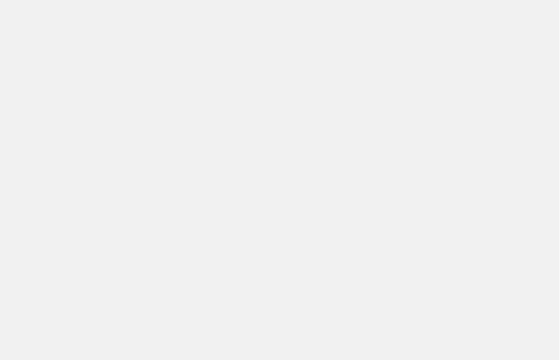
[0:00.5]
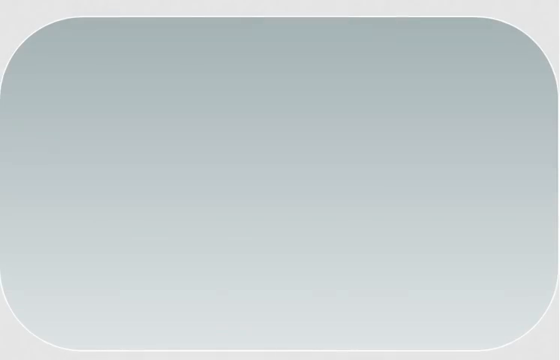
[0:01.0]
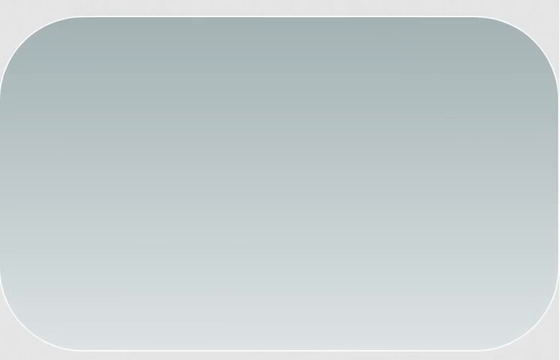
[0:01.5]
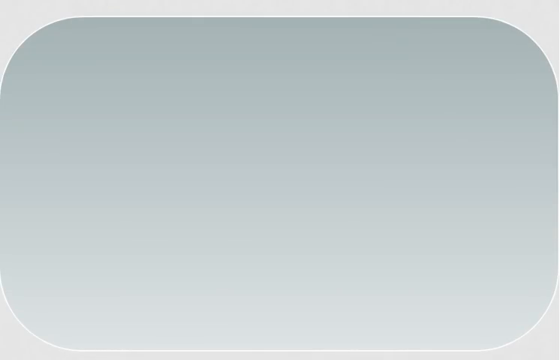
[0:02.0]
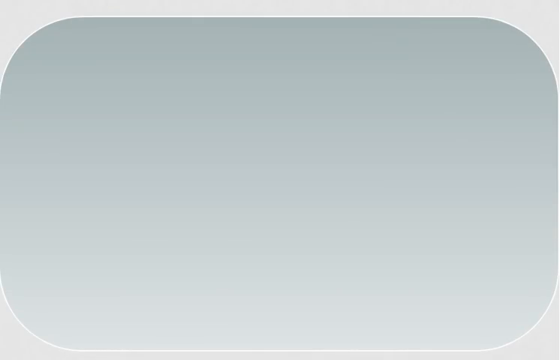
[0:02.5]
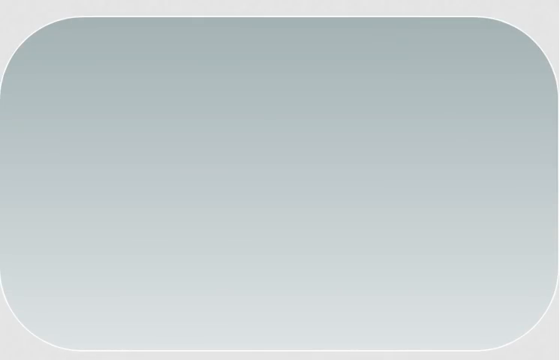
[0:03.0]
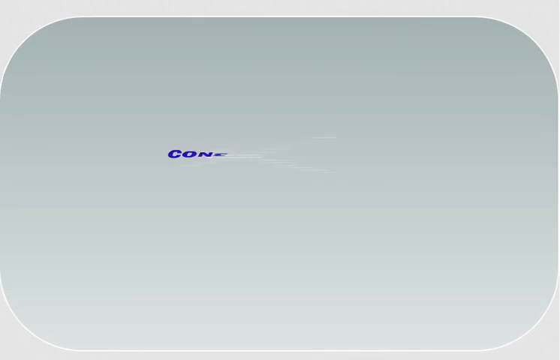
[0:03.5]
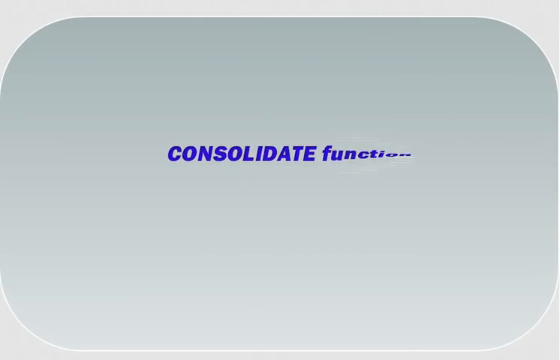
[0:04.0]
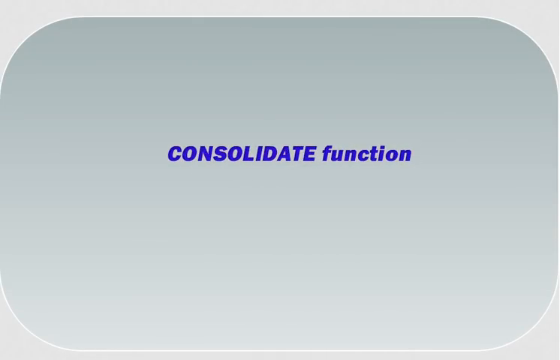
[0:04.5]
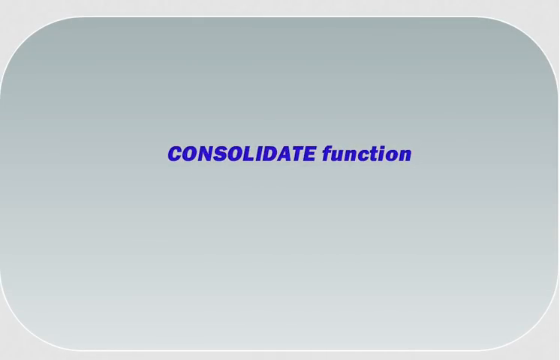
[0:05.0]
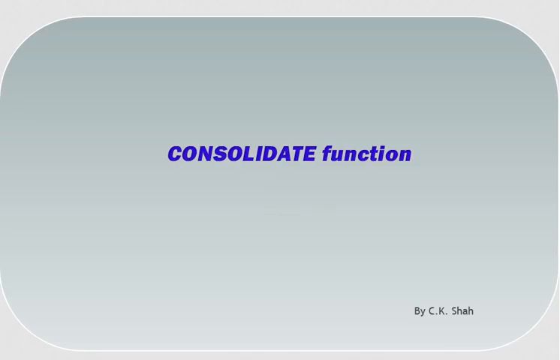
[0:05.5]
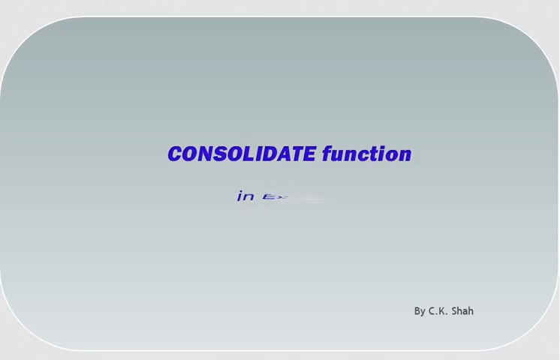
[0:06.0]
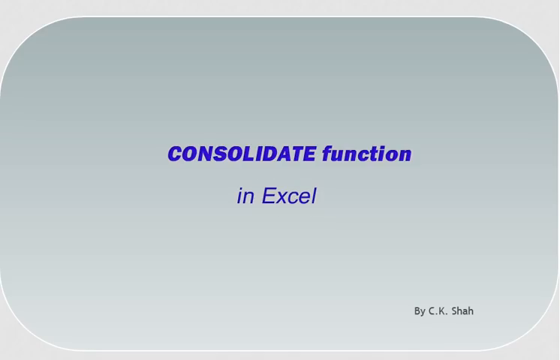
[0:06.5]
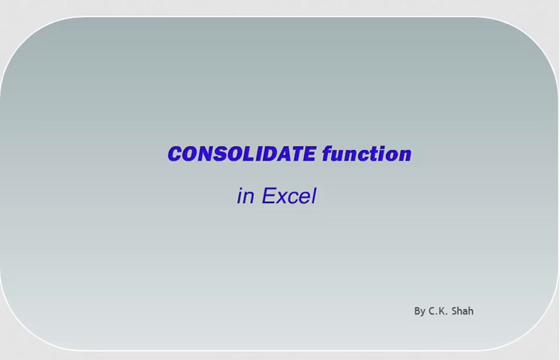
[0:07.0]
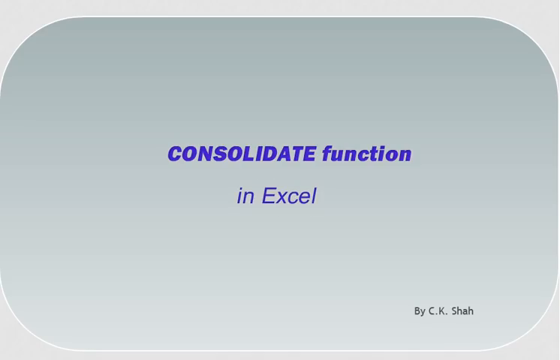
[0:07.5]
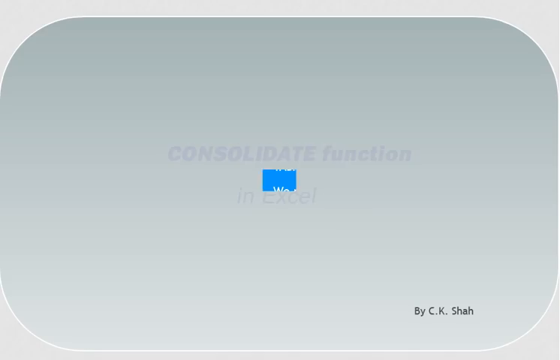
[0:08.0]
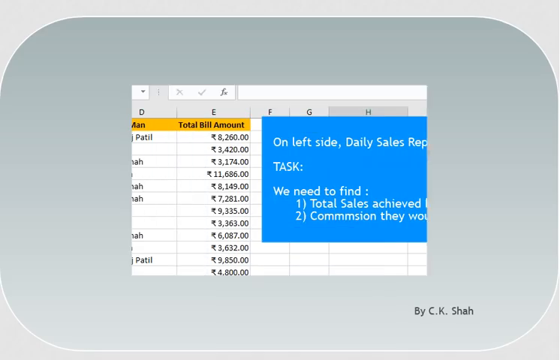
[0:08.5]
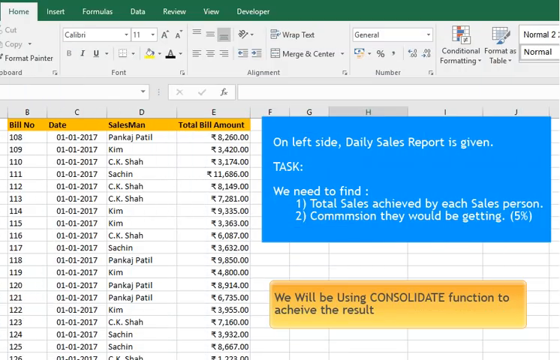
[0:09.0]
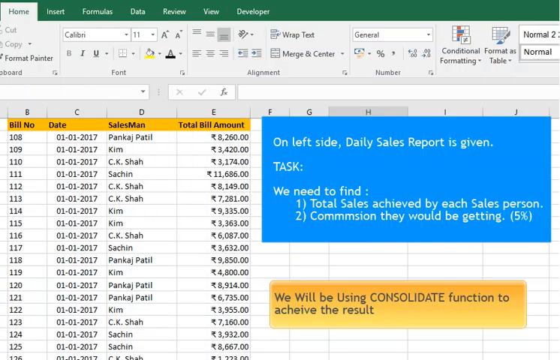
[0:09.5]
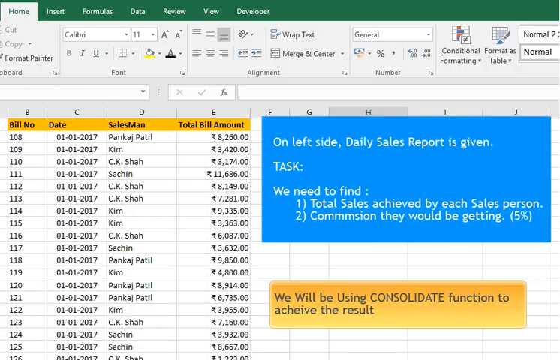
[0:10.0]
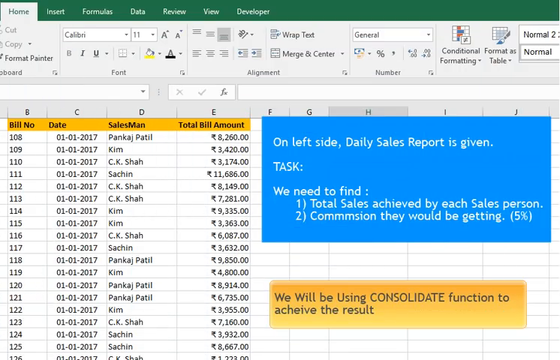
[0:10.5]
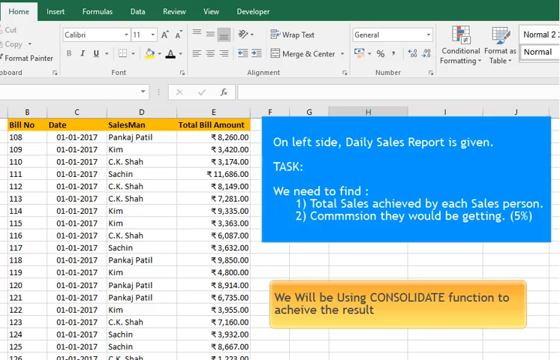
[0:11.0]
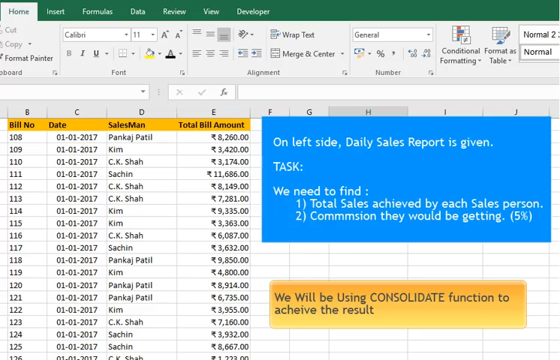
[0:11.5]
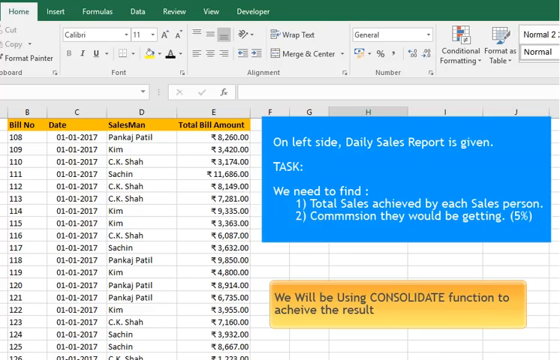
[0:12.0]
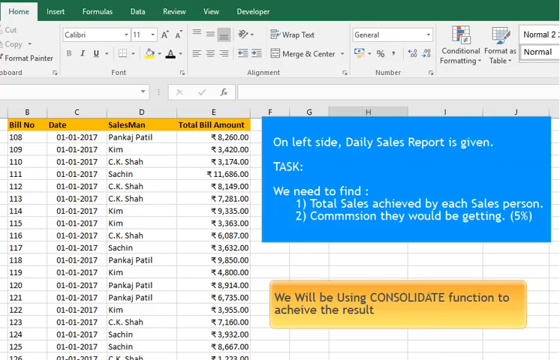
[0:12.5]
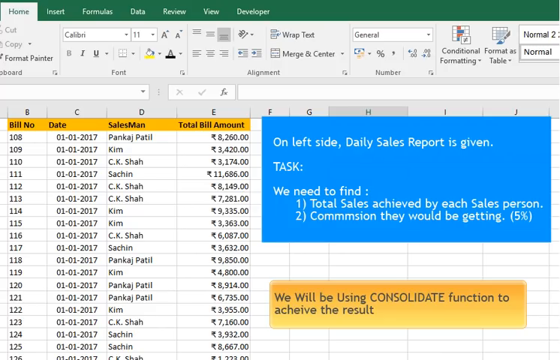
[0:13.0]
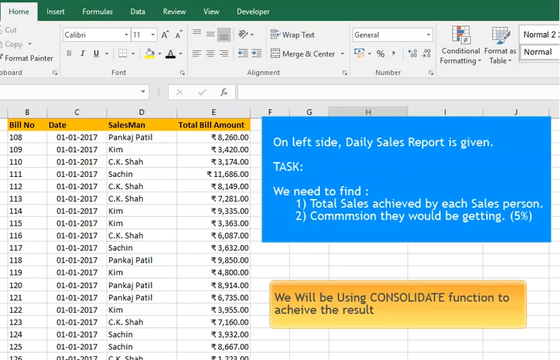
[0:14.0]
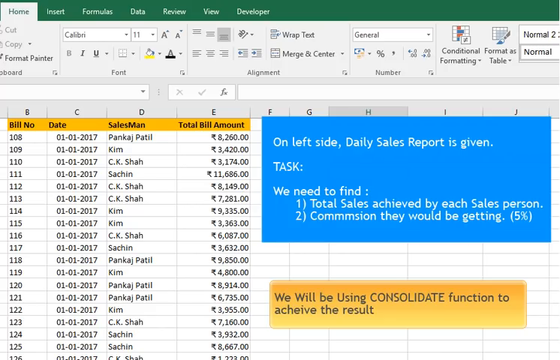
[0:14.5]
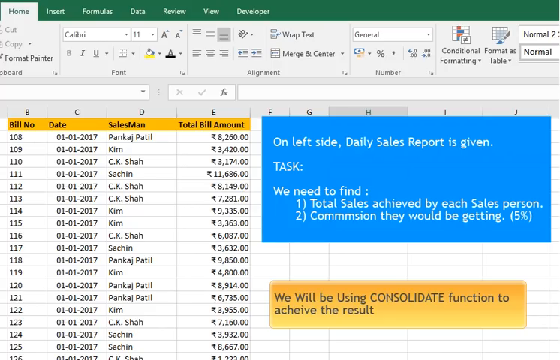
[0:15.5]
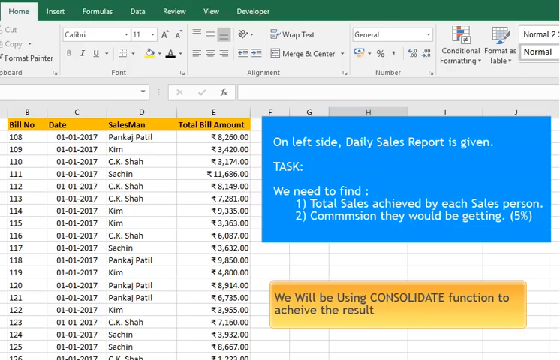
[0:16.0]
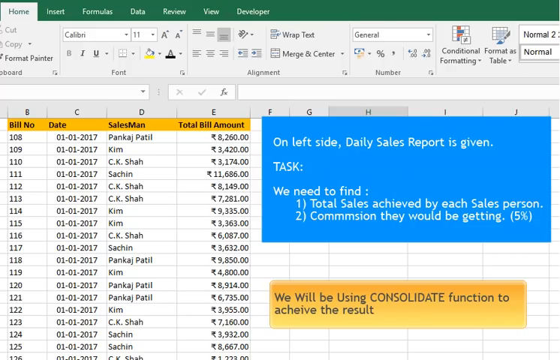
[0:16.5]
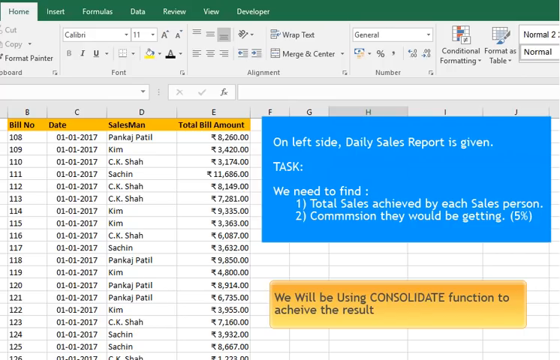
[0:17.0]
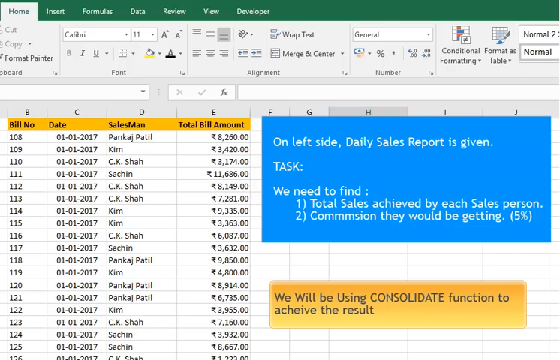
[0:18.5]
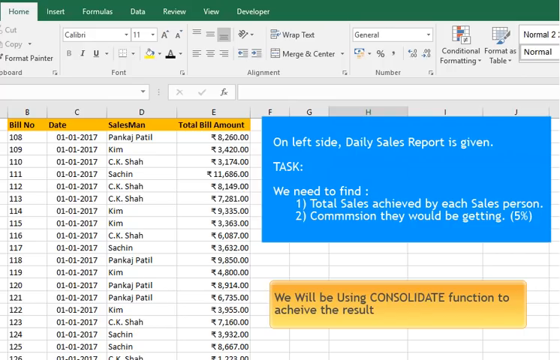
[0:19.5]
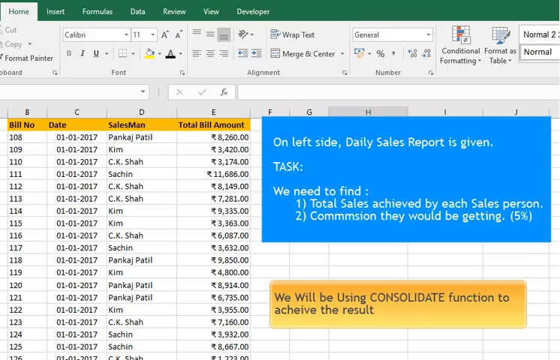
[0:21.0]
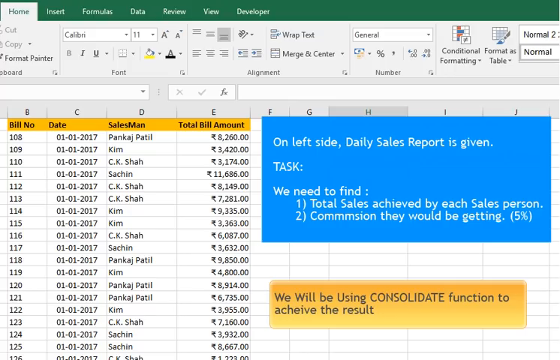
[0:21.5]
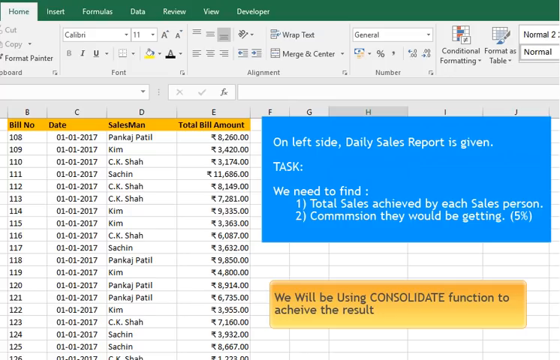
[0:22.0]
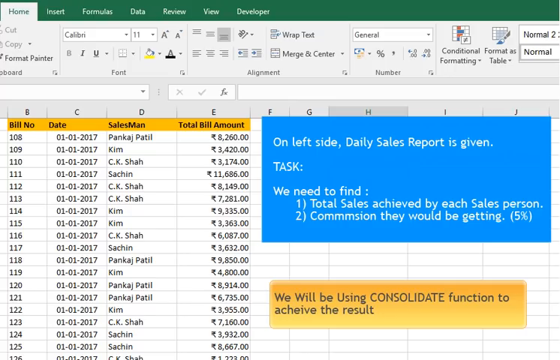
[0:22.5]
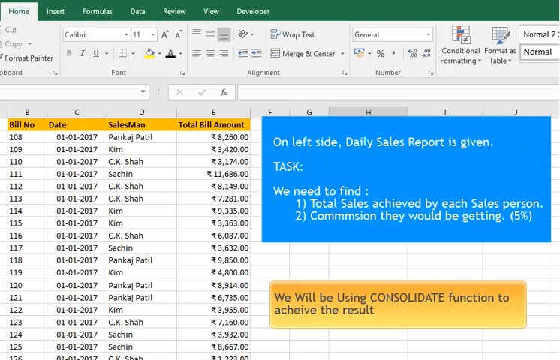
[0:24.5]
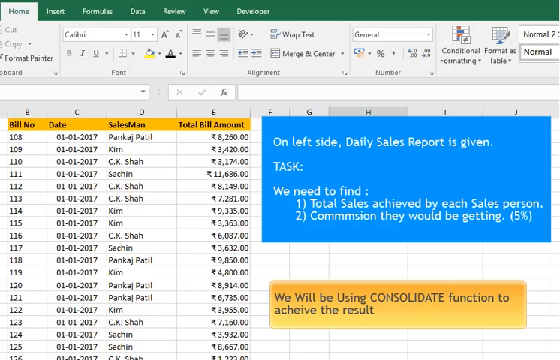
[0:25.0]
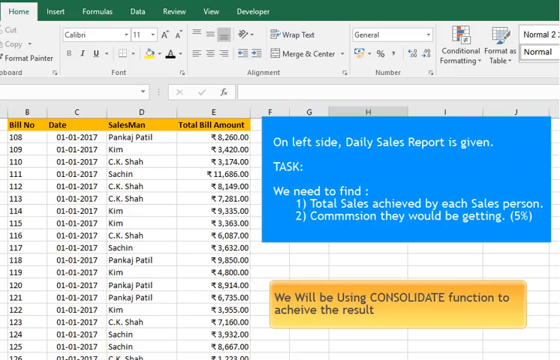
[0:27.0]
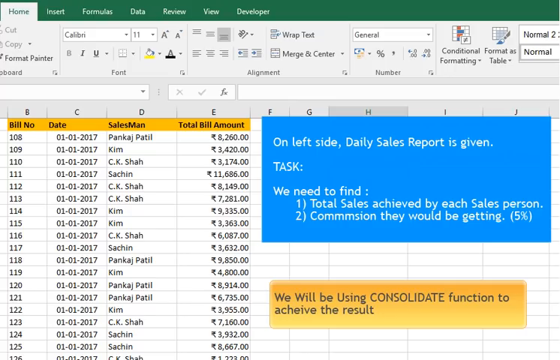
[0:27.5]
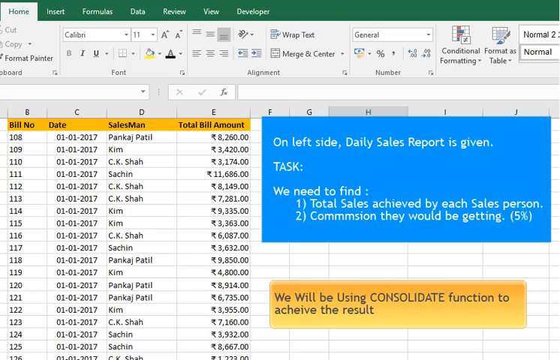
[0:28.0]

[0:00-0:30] The words "consolidate functions" appear on the screen of an Excel page showing some data. On the left side, the daily sales reported are given. The task lists number one, total sales achieved by each salesperson, and number two, the commission they will be getting, five percent. There is also a blue section and a yellow section; the yellow one states that the consolidate function will be used to achieve the result. The setting does not change, and the details are clear and readable.